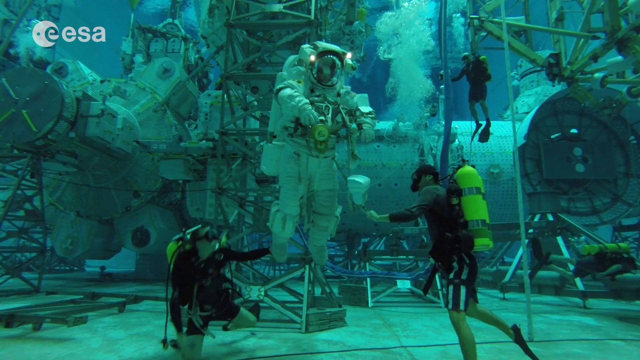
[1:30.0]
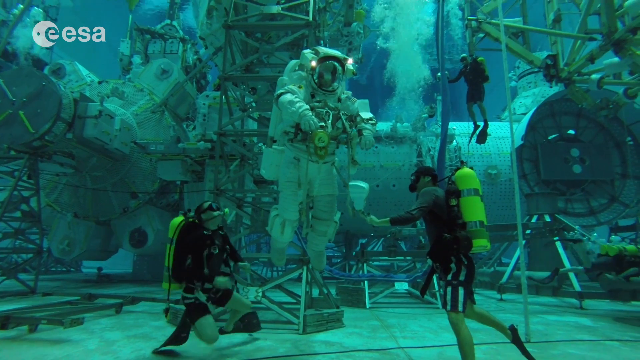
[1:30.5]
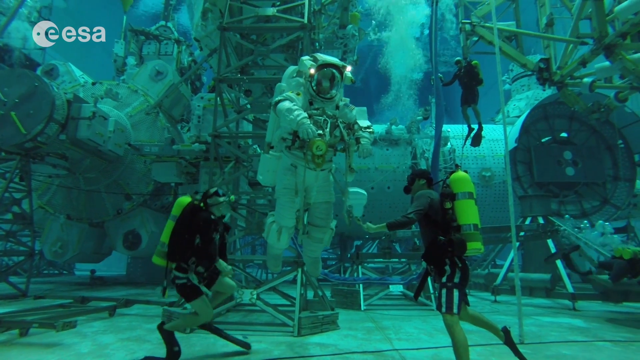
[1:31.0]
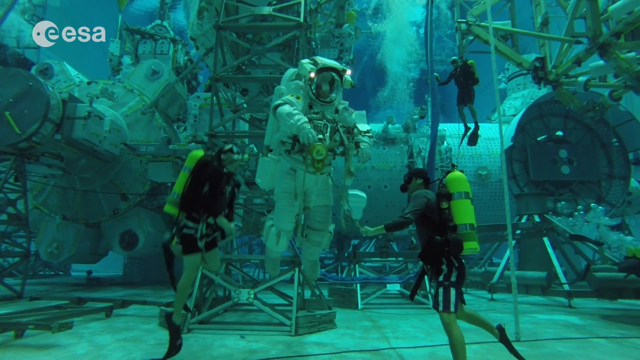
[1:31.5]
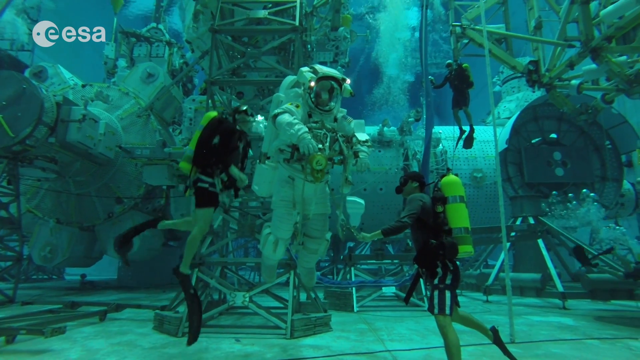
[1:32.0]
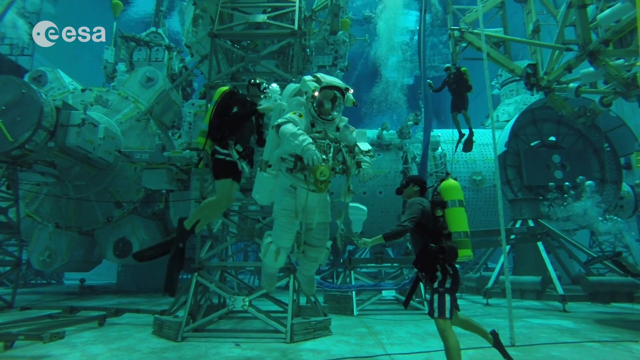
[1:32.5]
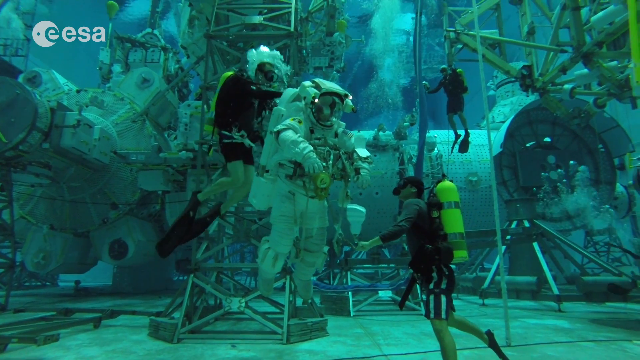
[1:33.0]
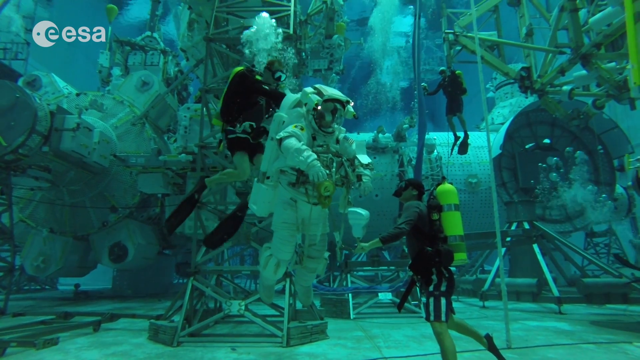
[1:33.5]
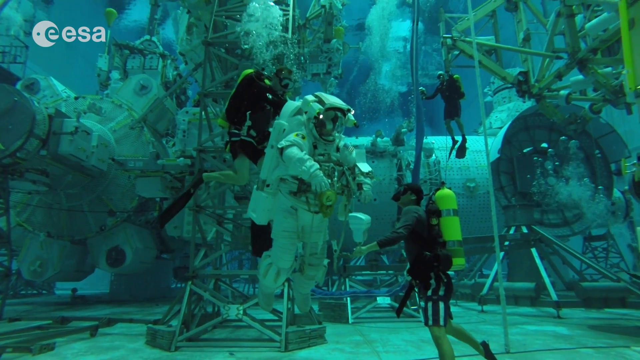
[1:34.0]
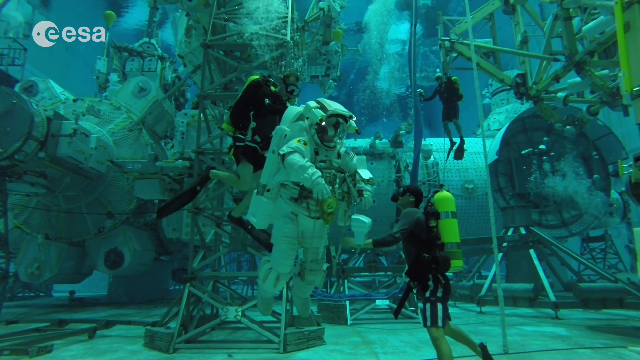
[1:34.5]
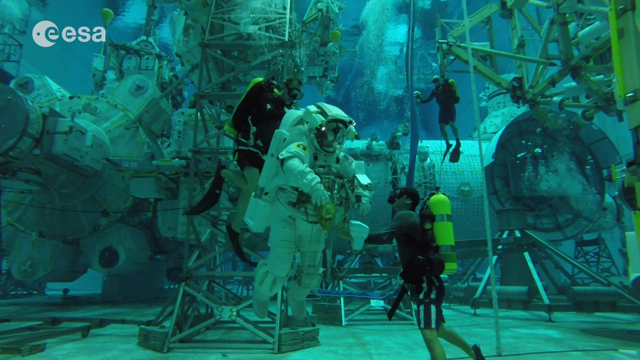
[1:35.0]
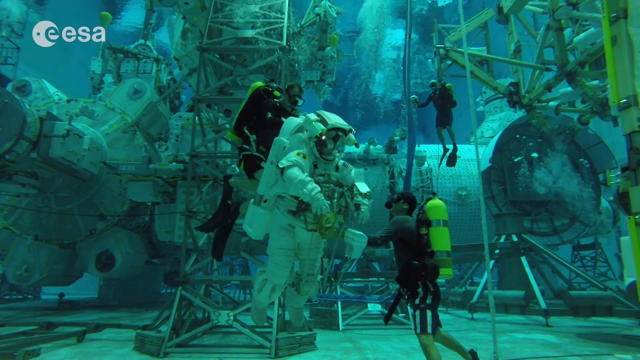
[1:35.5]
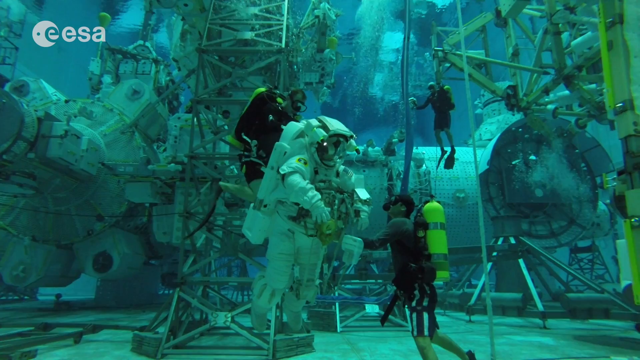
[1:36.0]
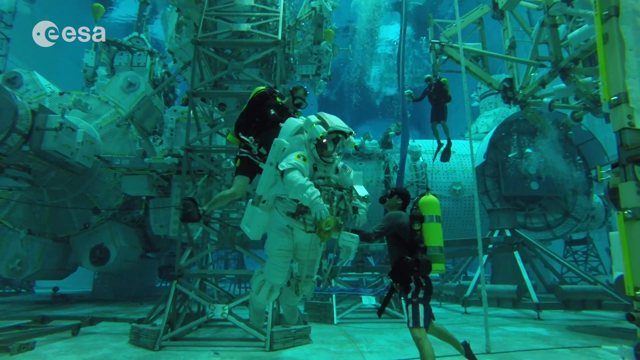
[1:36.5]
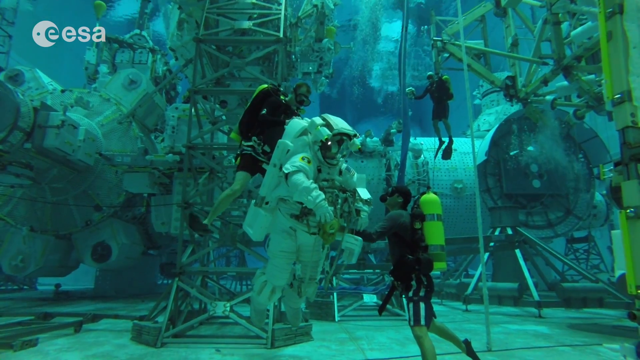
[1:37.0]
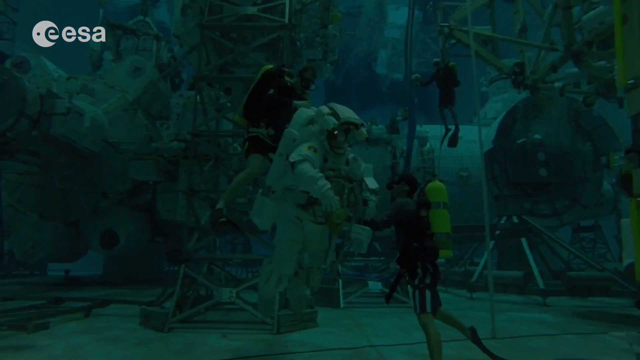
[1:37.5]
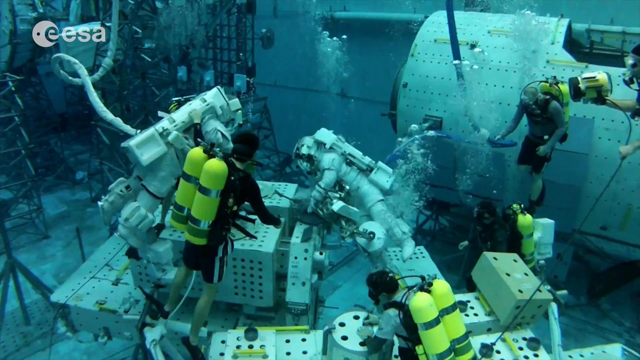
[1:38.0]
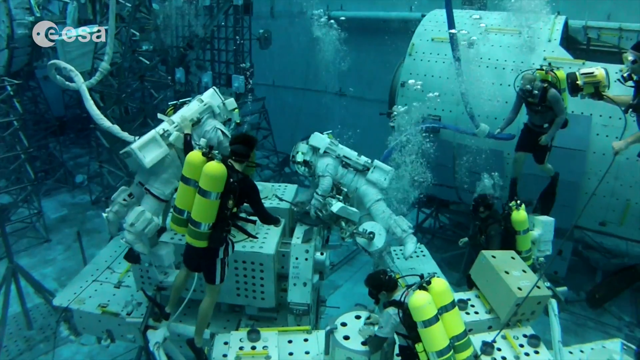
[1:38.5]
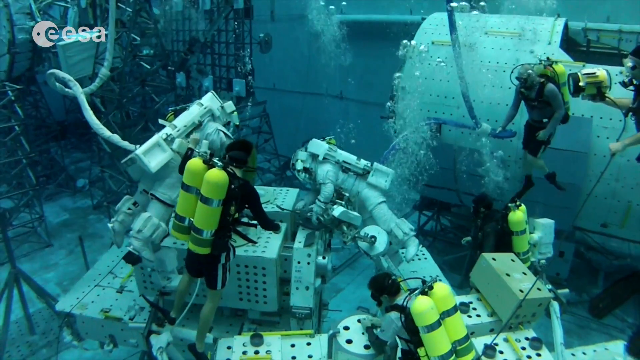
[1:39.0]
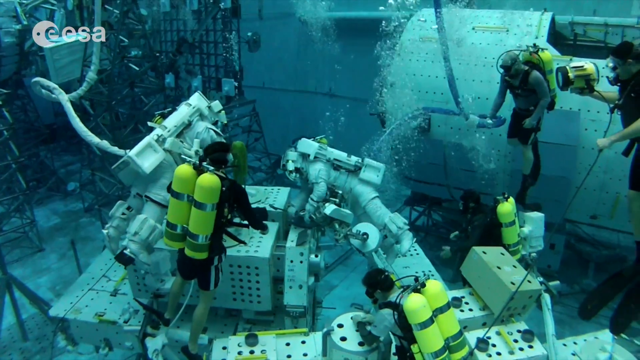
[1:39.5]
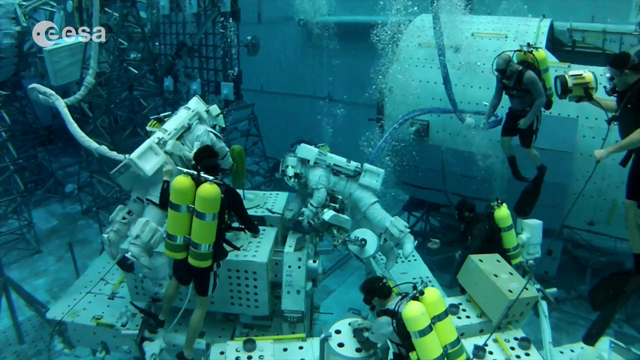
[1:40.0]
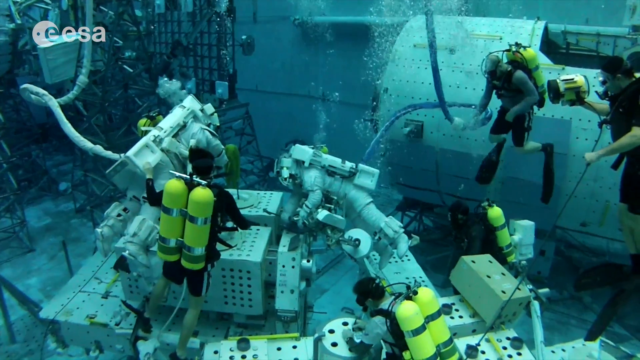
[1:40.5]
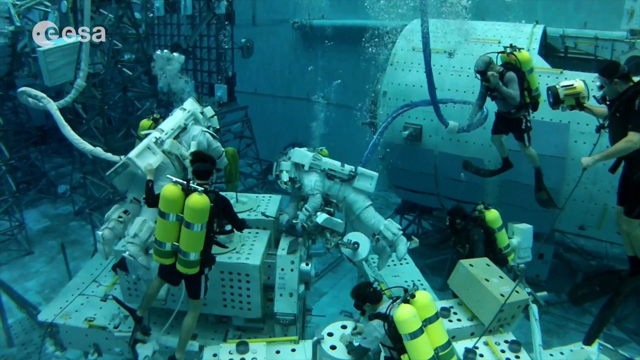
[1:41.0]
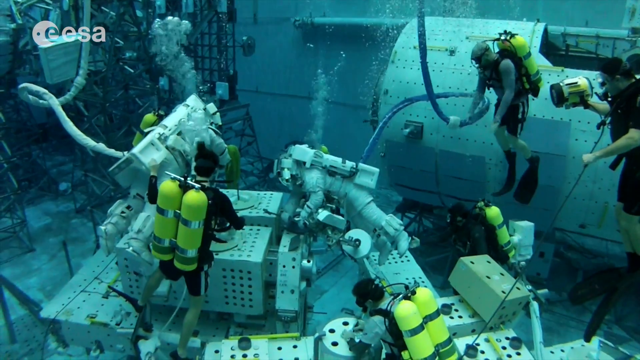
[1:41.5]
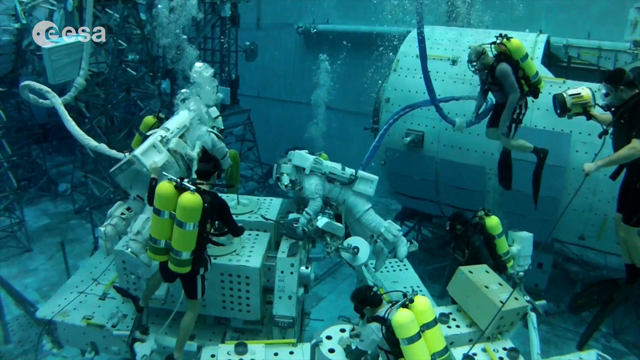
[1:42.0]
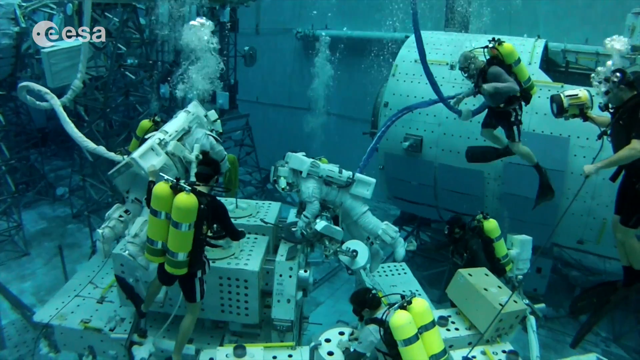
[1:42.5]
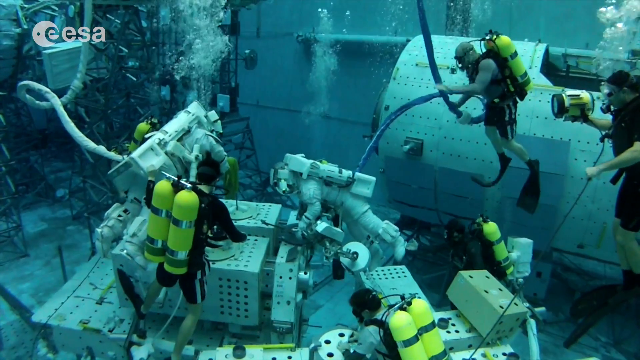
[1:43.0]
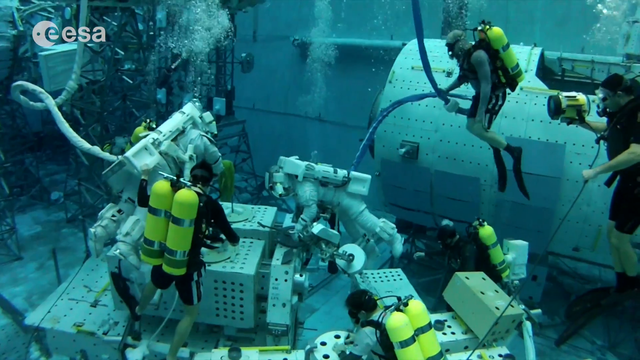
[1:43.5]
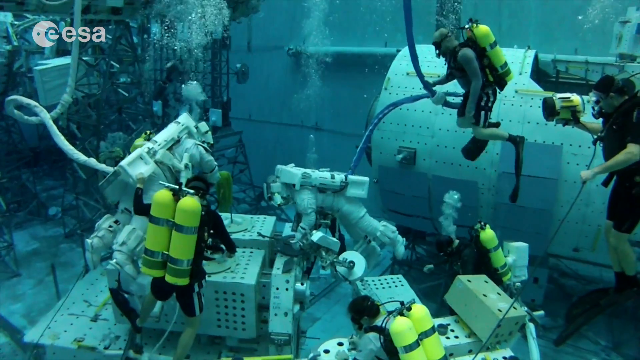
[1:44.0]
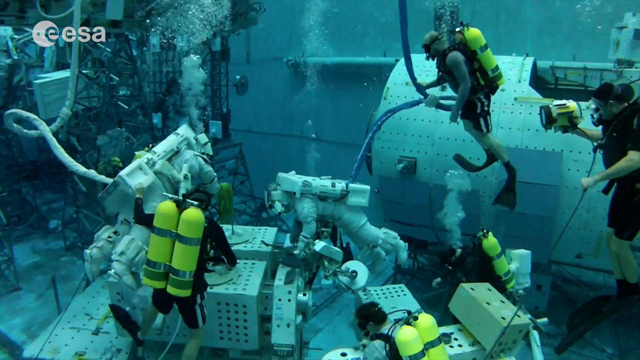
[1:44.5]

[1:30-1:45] Divers swim around the astronaut, and one swims a little higher up his back and checks something there. The view then shows more activity: two astronauts, almost lying face down and floating, with apparently five scuba divers swimming all around them. The blue cord is connected to some other oxygen system rather than a diver's tank. One astronaut has the blue cord and the other a white one, and the cords sort of flow up out of view. There is a lot of metal equipment underneath the divers. On the right-hand side one diver holds a large underwater flashlight. Many bubbles come from the divers, who are all watching the astronauts.